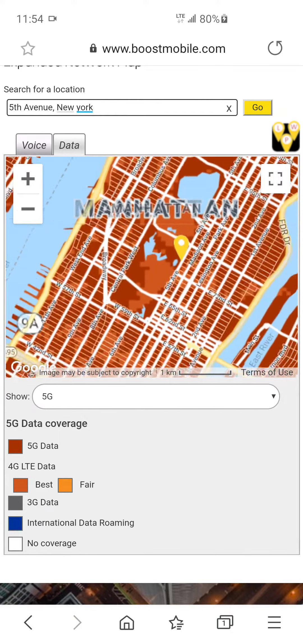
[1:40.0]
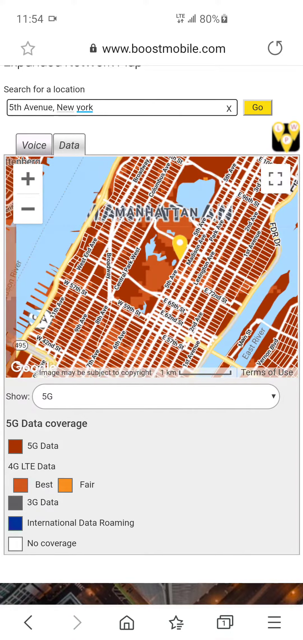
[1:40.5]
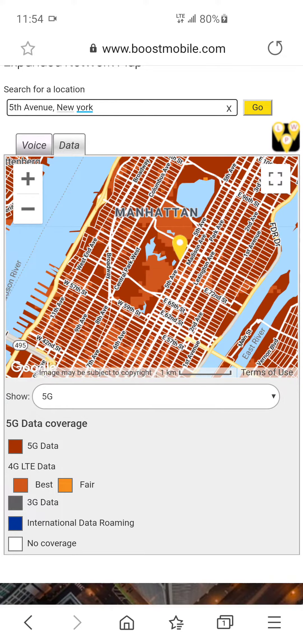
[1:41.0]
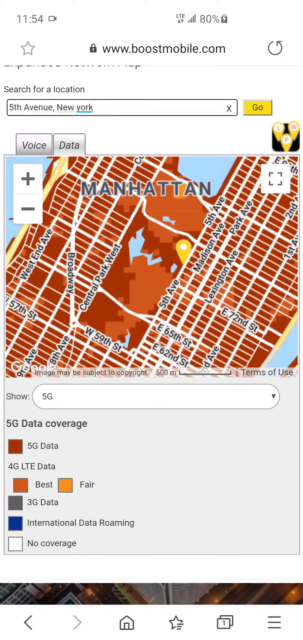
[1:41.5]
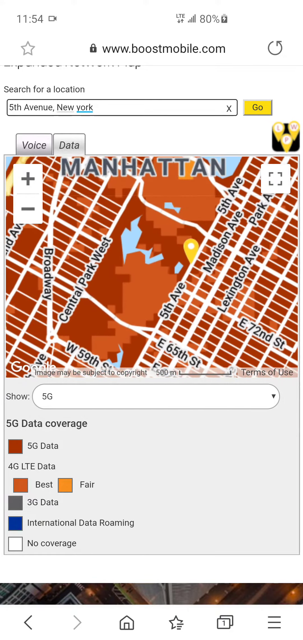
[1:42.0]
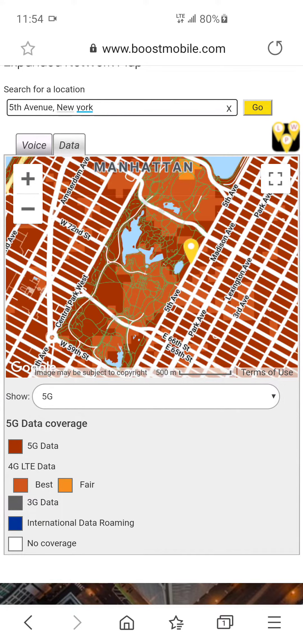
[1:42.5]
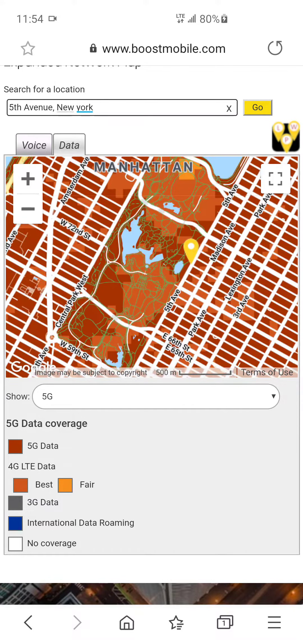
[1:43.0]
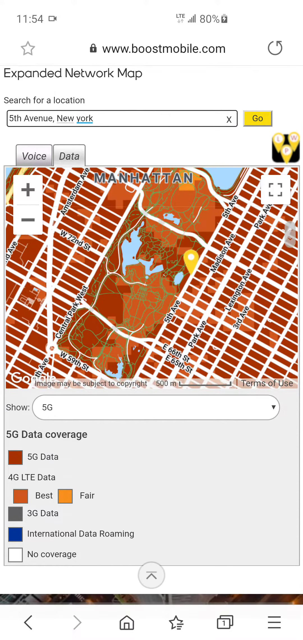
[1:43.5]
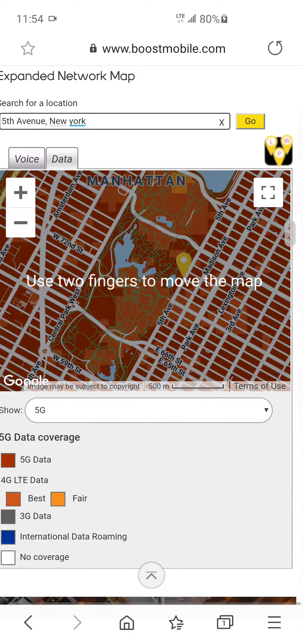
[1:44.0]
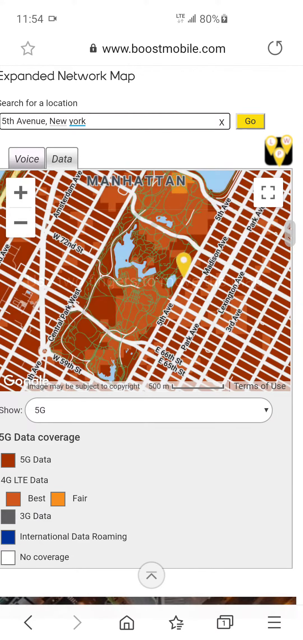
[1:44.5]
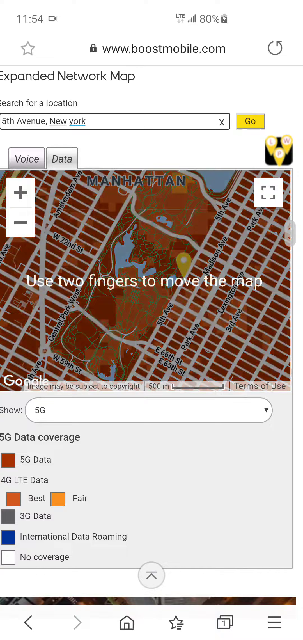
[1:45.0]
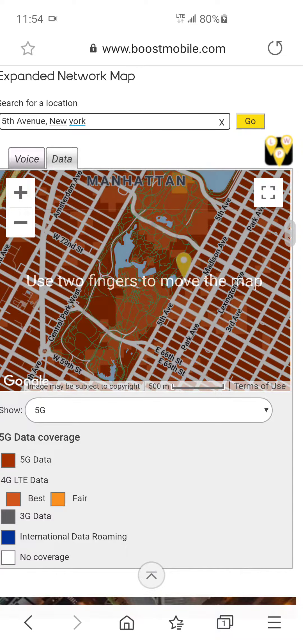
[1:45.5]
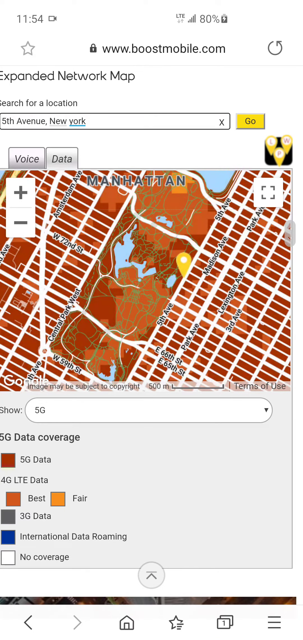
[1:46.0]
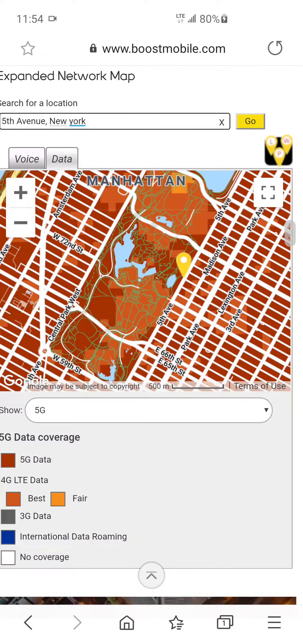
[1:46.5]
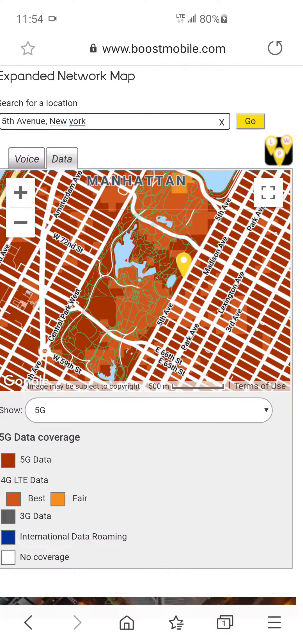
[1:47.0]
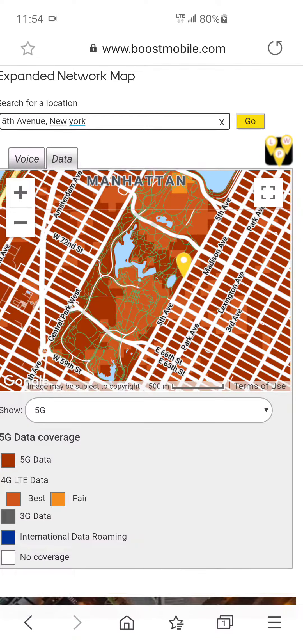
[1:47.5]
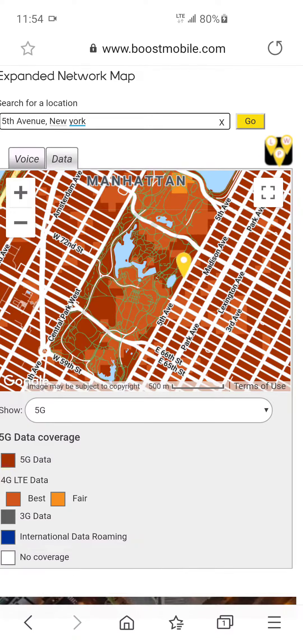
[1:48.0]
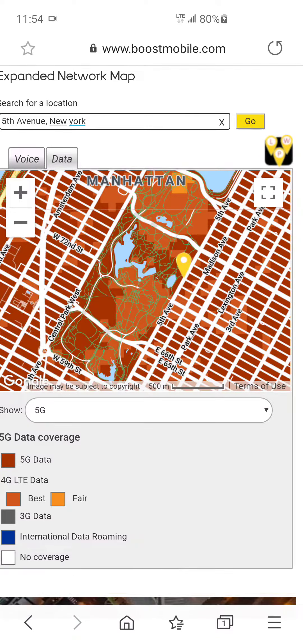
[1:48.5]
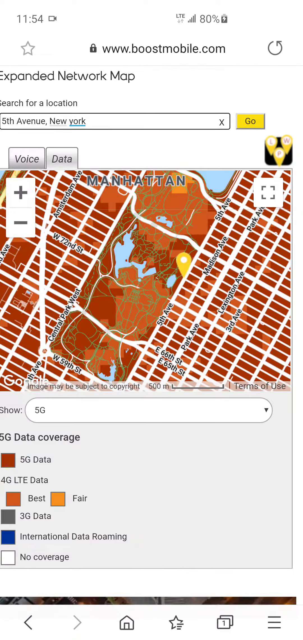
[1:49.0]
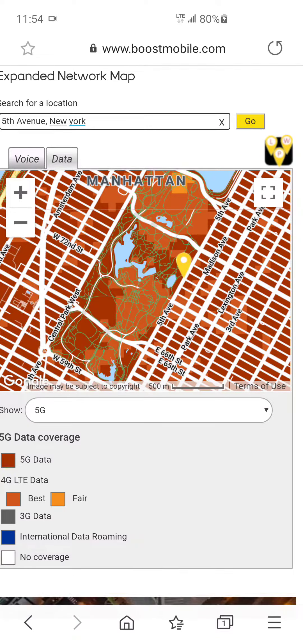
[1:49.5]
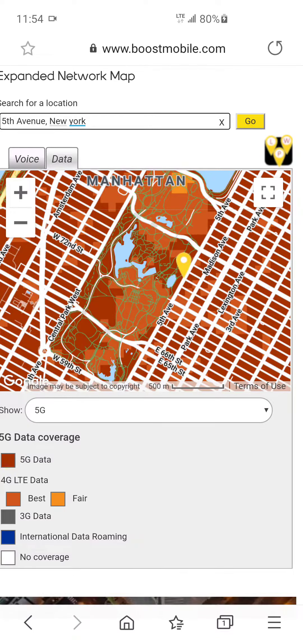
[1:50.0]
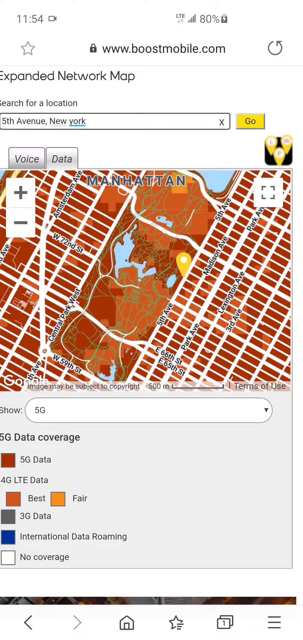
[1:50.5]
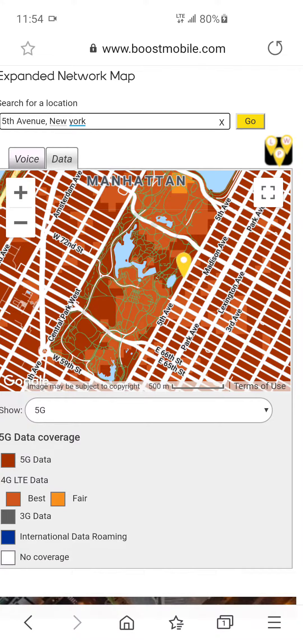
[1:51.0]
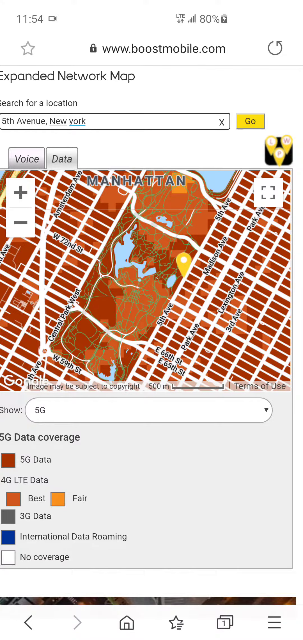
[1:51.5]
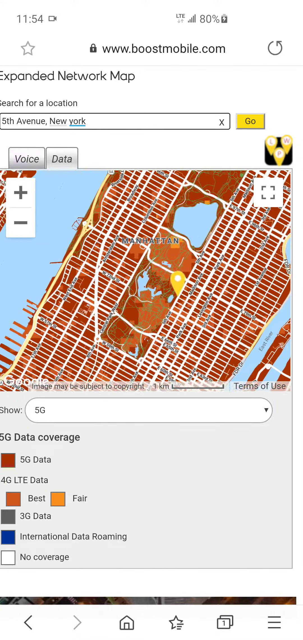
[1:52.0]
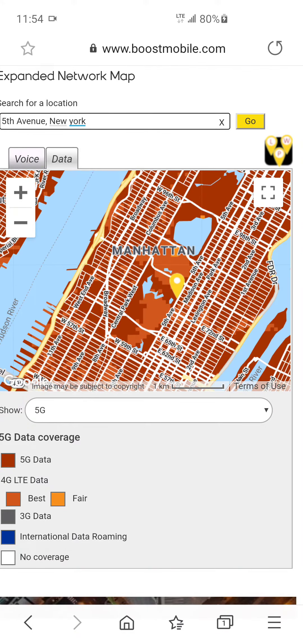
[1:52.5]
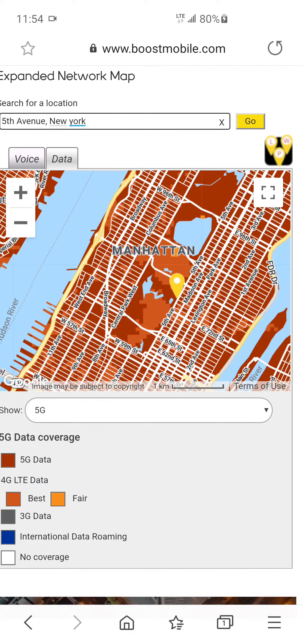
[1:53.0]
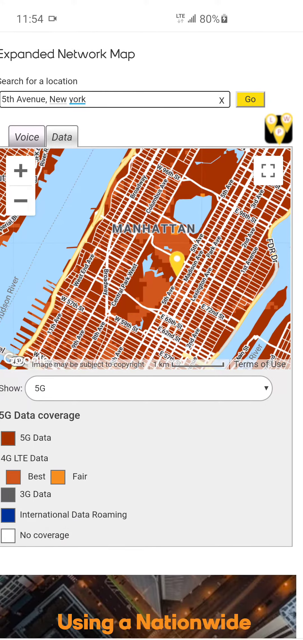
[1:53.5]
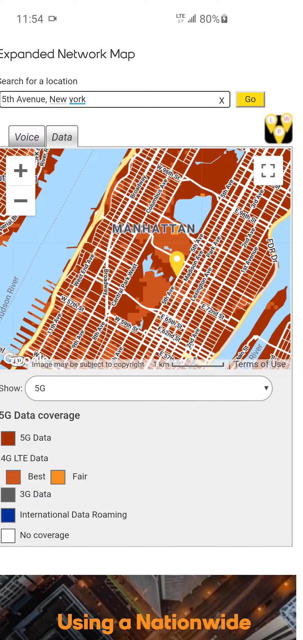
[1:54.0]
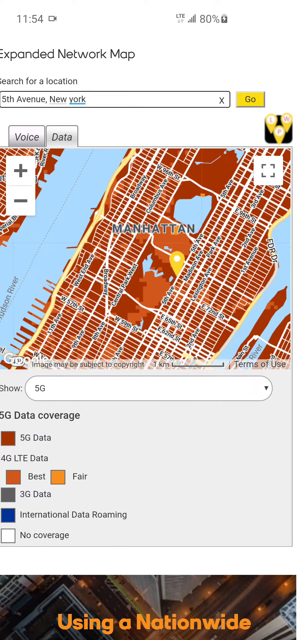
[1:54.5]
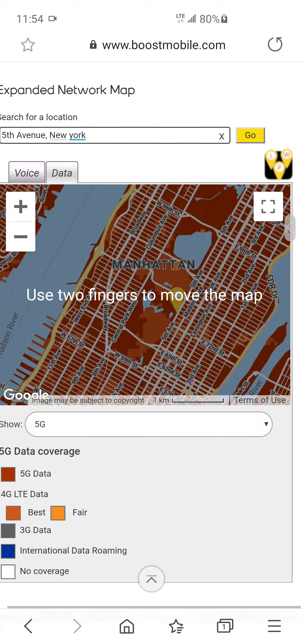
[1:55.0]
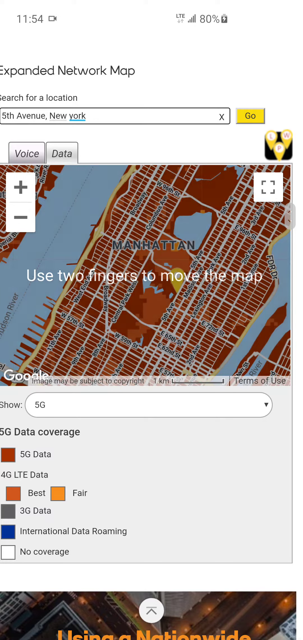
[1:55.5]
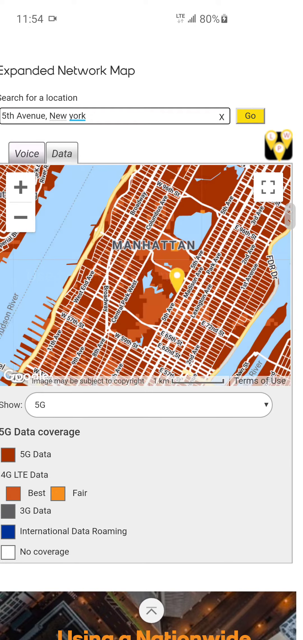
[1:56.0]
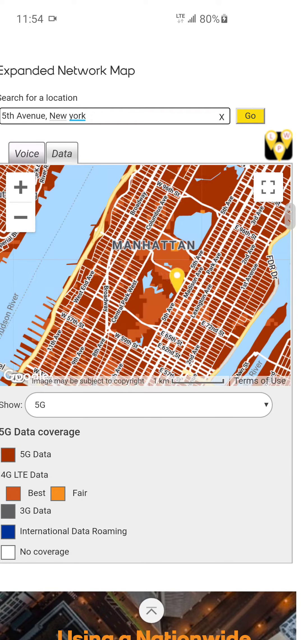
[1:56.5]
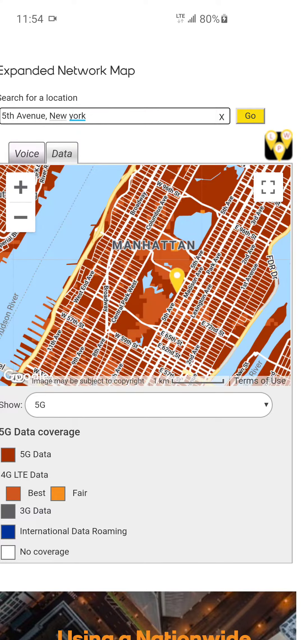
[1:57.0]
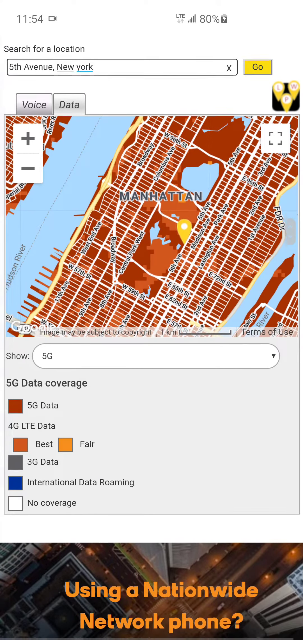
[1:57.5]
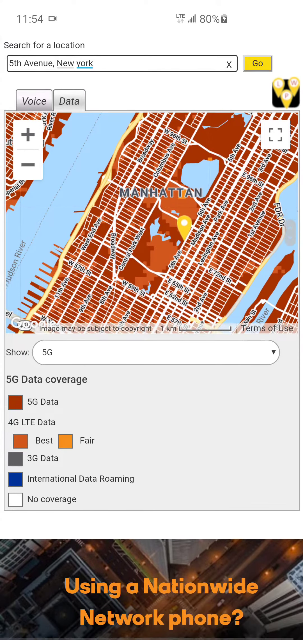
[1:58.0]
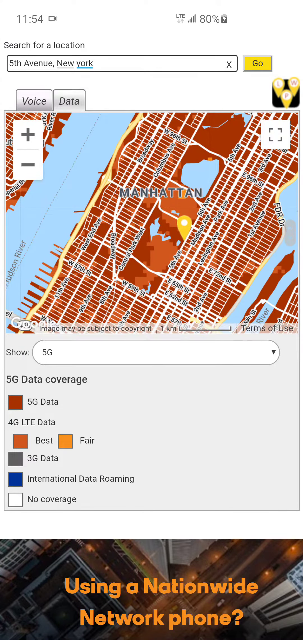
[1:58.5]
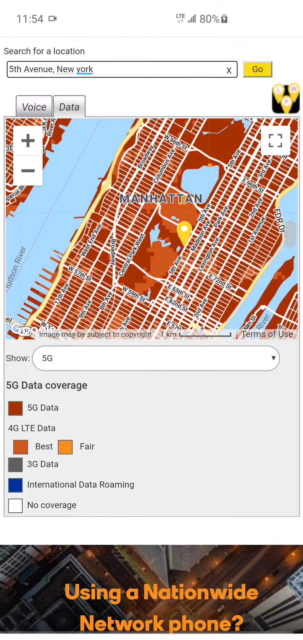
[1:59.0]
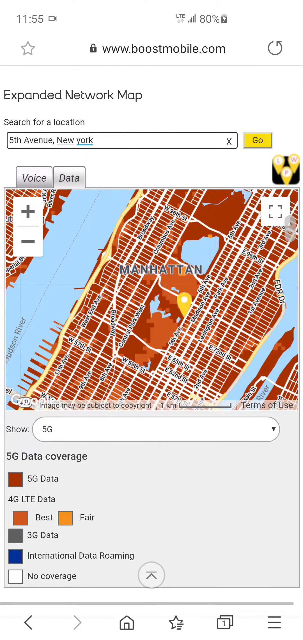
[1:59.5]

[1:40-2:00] On the BoostMobile.com mobile website, the user looks more closely at the map. With Fifth Avenue, New York typed in, the map appears to be zeroed in on Manhattan. The user zooms in and zooms out, and the various streets are visible. Instructions say to use two fingers to move the map around, and there are the typical map controls to maximize, scroll around, and zoom in and zoom out. A key on the map shows the different data coverage options apparently available in this area of Manhattan and New York City.